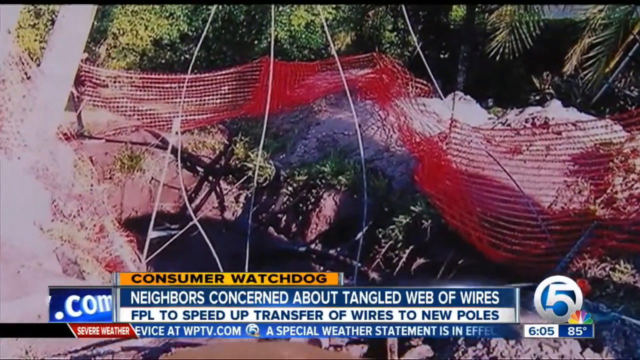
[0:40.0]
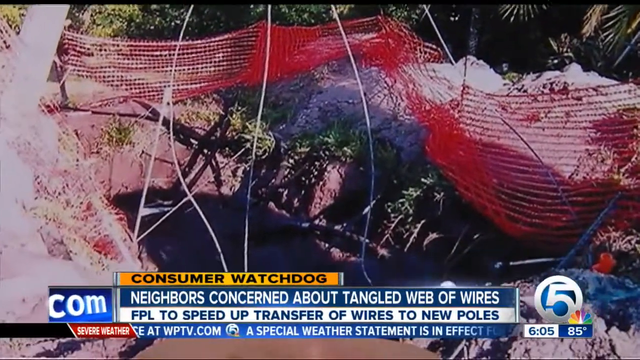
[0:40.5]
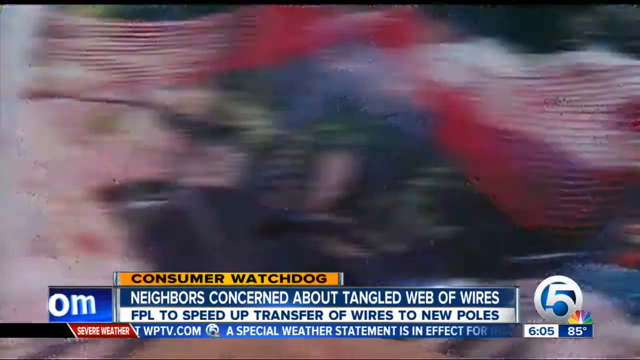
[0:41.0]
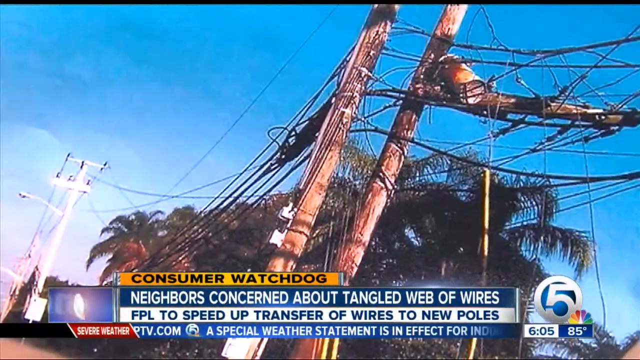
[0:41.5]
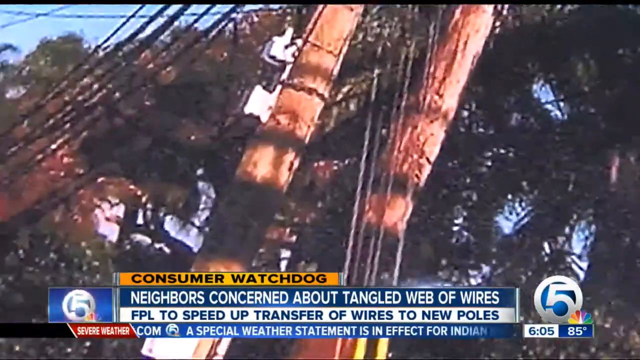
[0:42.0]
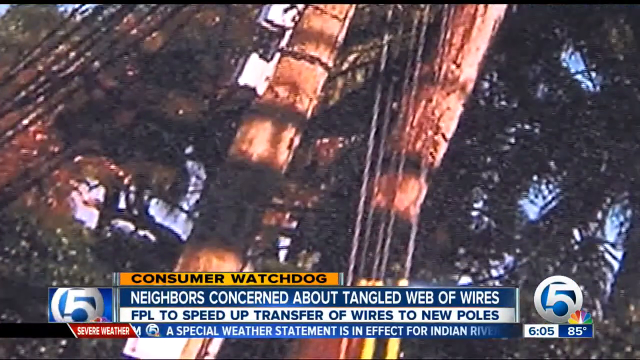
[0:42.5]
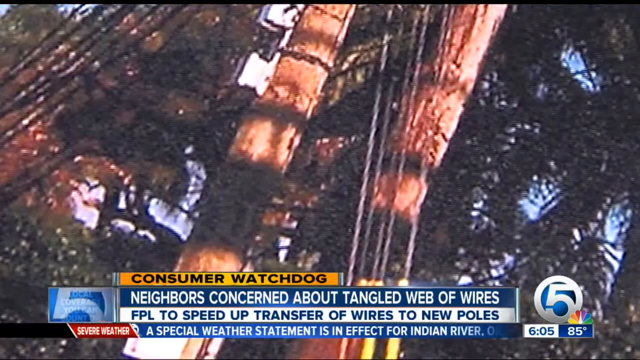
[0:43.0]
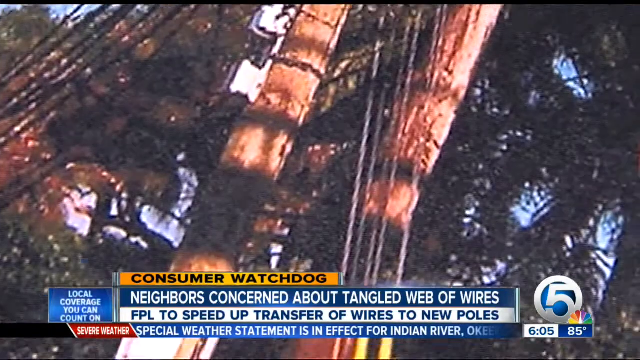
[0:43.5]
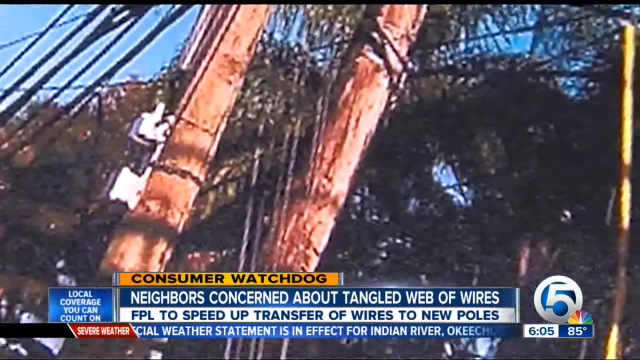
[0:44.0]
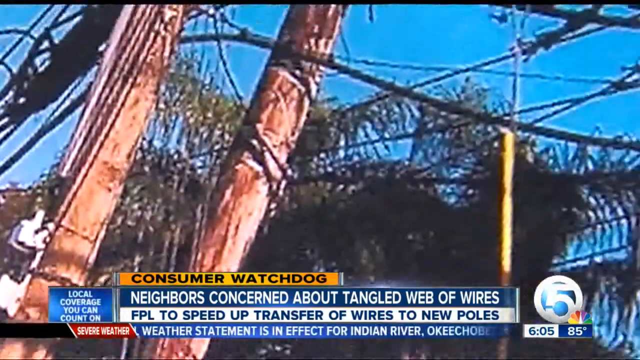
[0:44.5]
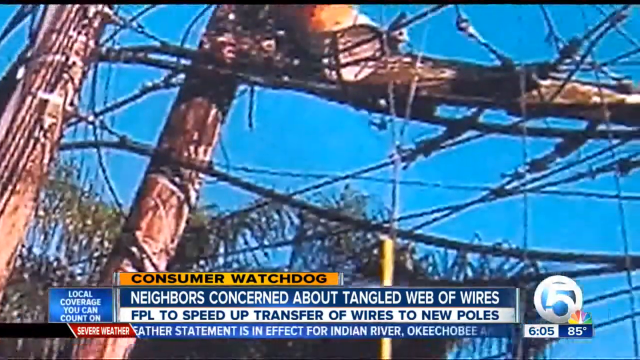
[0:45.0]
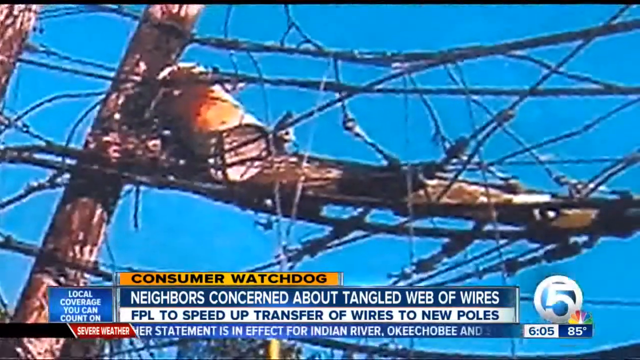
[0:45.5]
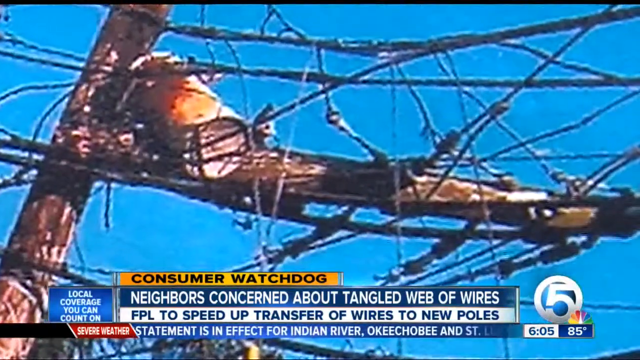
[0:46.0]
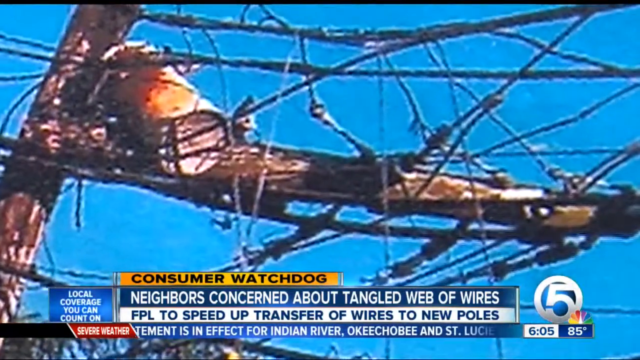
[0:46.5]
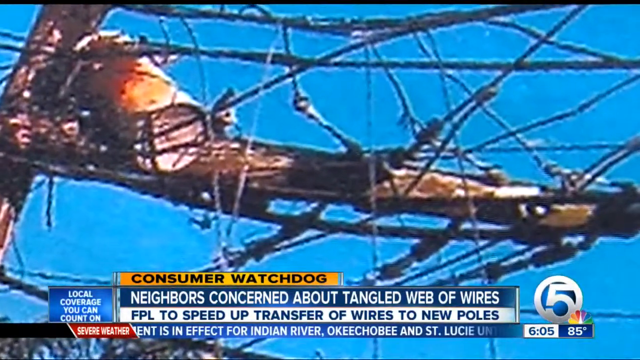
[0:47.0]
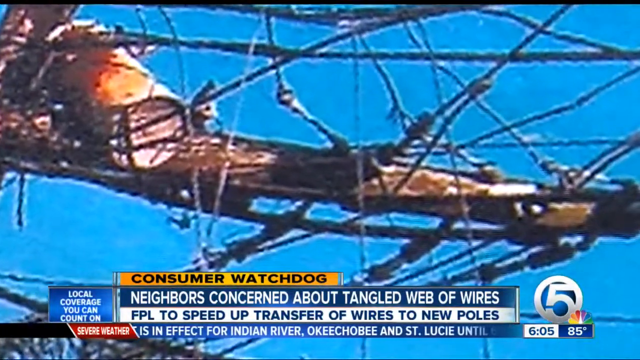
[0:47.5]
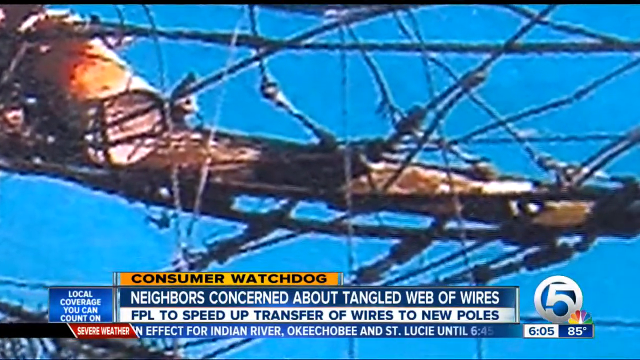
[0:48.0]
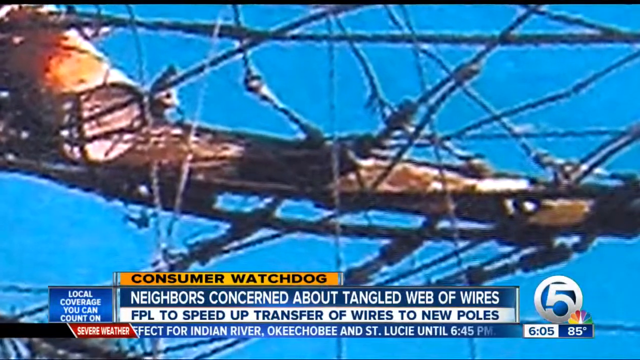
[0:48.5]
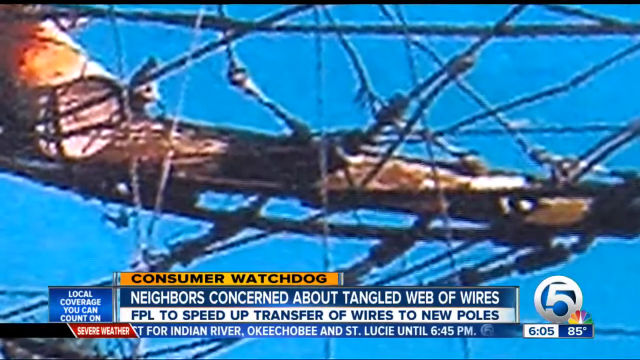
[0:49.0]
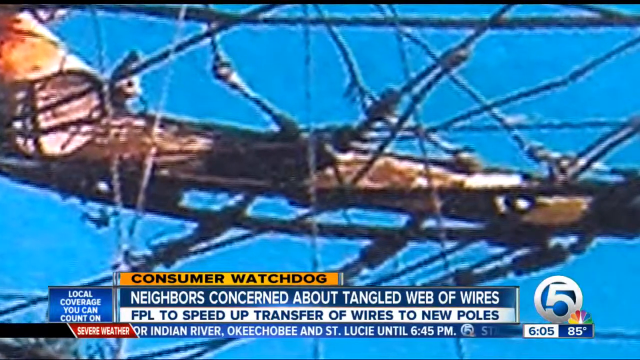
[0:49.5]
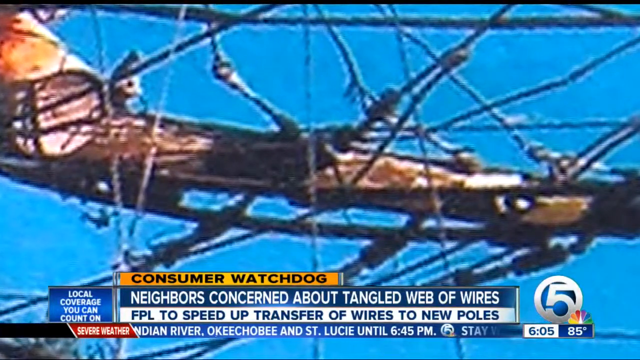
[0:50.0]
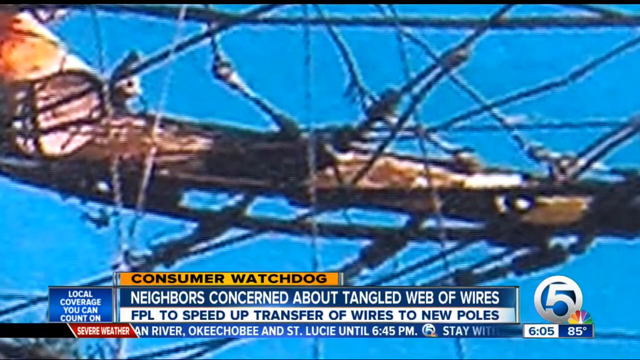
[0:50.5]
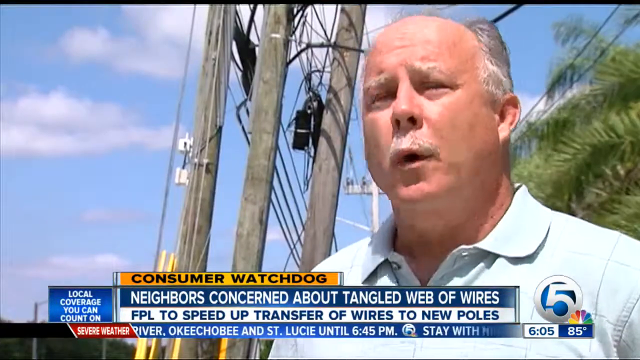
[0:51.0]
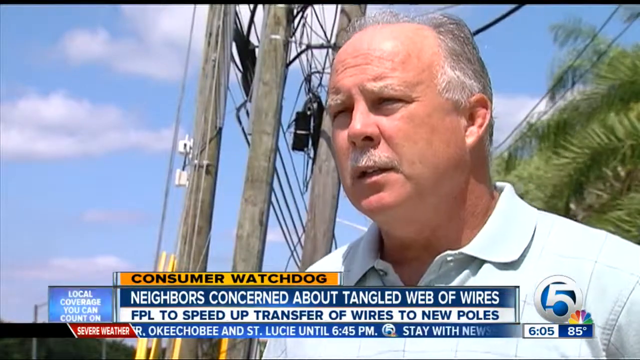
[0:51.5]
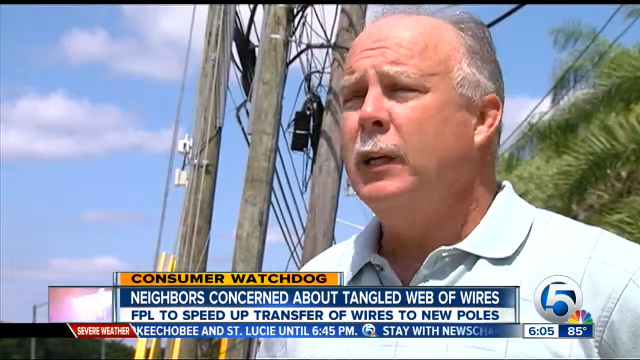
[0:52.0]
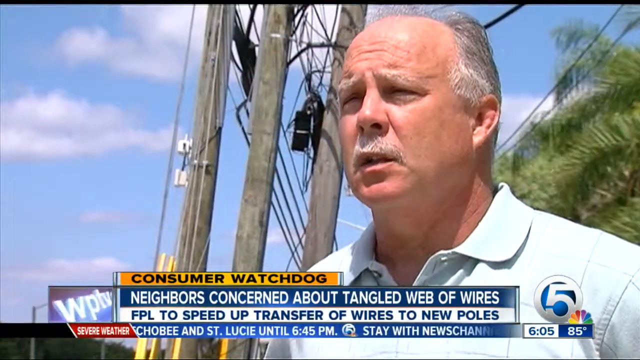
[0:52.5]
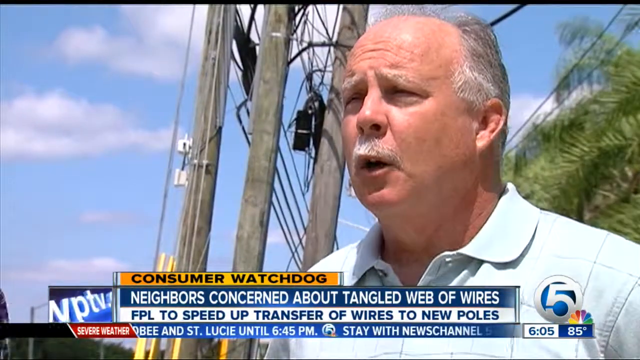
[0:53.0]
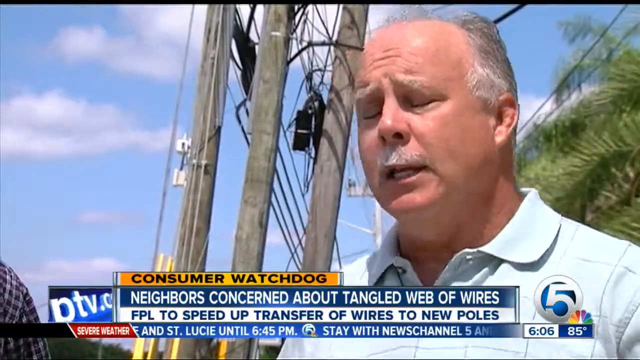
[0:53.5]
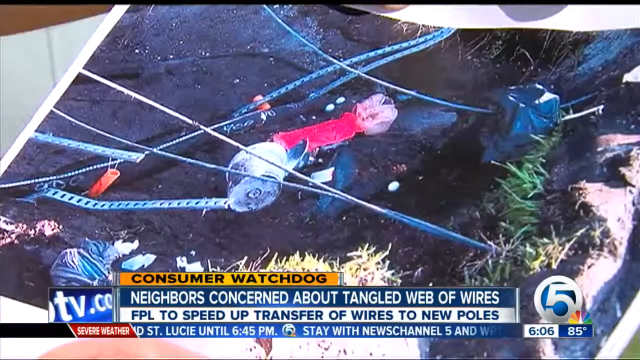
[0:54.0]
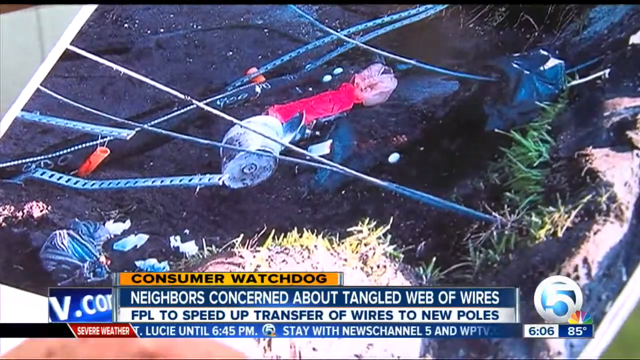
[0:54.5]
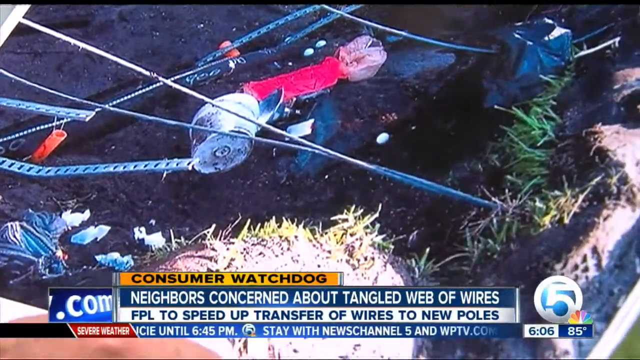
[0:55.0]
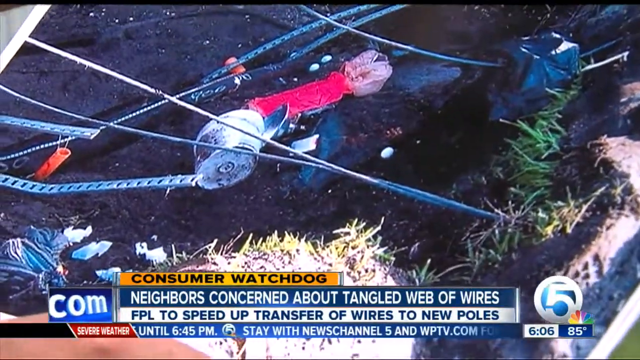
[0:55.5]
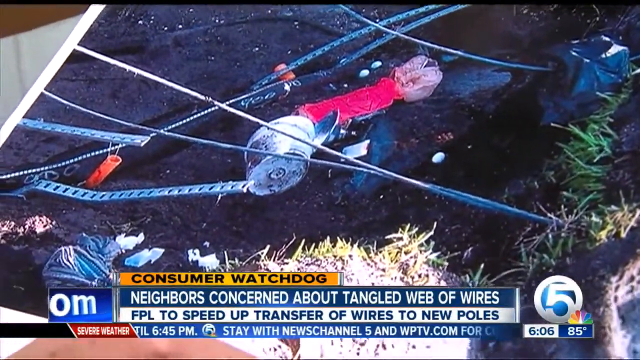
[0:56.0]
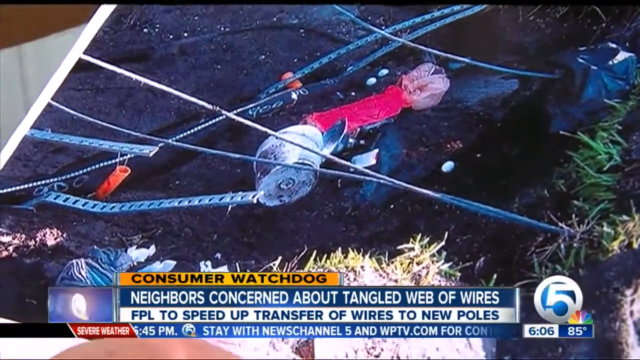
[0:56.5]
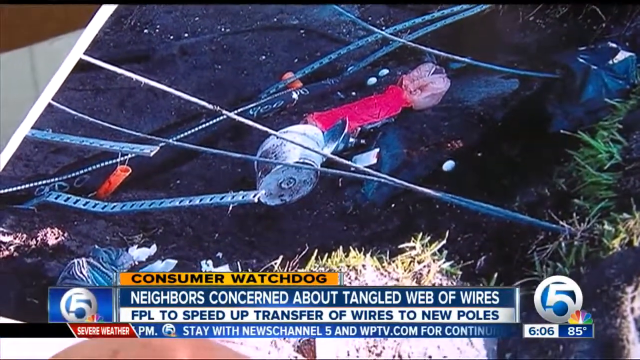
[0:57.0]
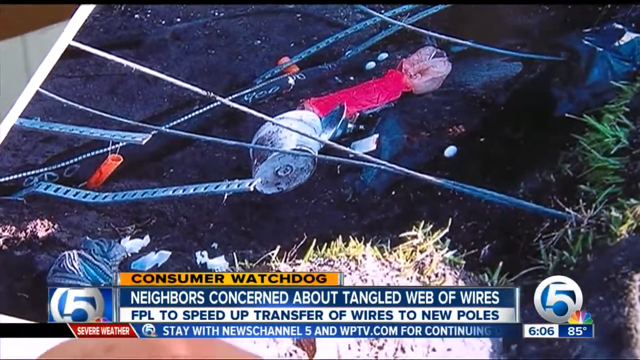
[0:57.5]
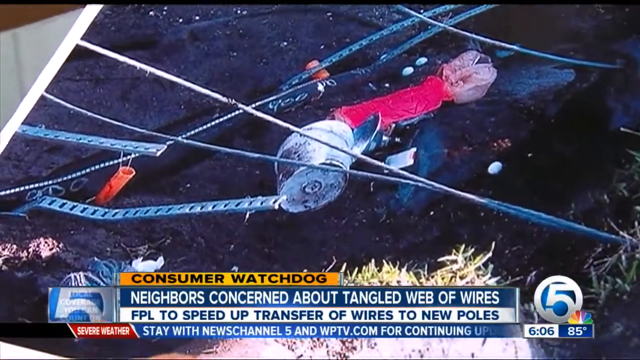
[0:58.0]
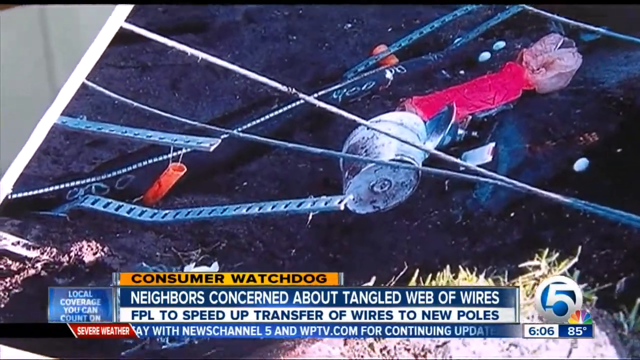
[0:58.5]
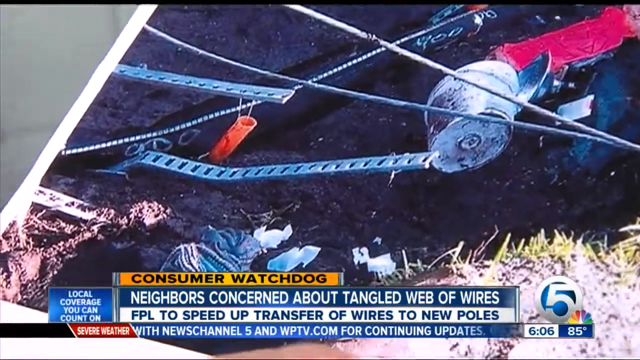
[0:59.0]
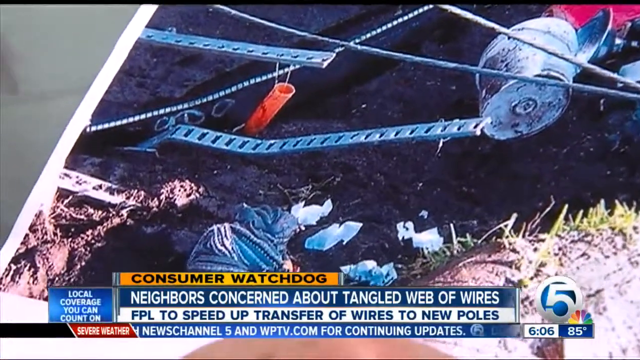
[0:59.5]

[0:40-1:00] The camera looks down at the ground, which has a lot of dirt and grass. What looks like a red, tangled, weedy fence material runs across the top portion of the screen, and wires come down vertically. The camera zooms in slightly, then zooms out to the telephone poles and quickly zooms in. The camera pans roughly up and toward the right across many wires that look tangled and completely out of sorts, zooming closer and closer to the web of wires. The view returns to the man seen earlier, now on the right side of the screen, with telephone poles in the background toward the left. He speaks into the camera, nodding his head up and down as he speaks. Once again the ground with various wires is shown; this appears to actually be a photograph of different wires on the ground.